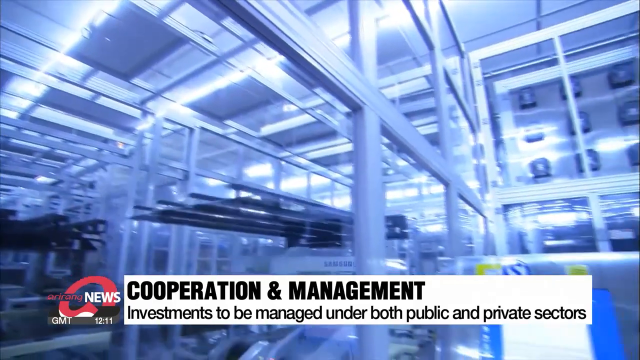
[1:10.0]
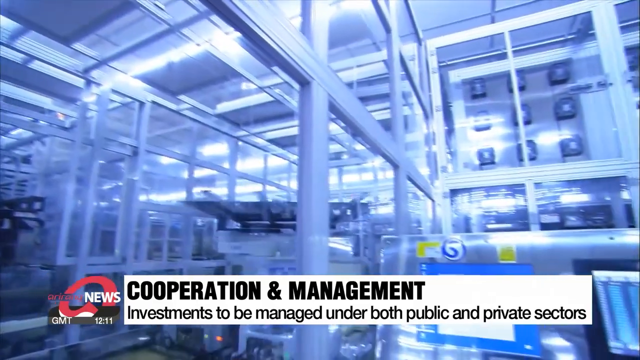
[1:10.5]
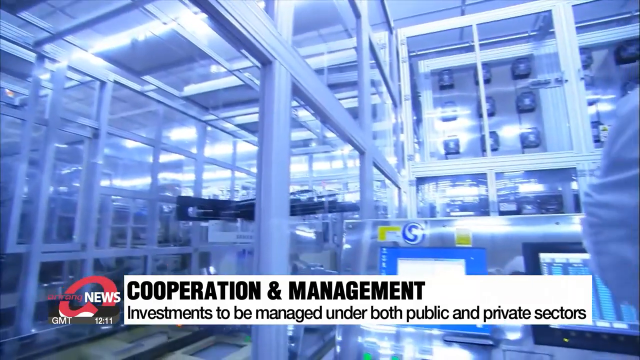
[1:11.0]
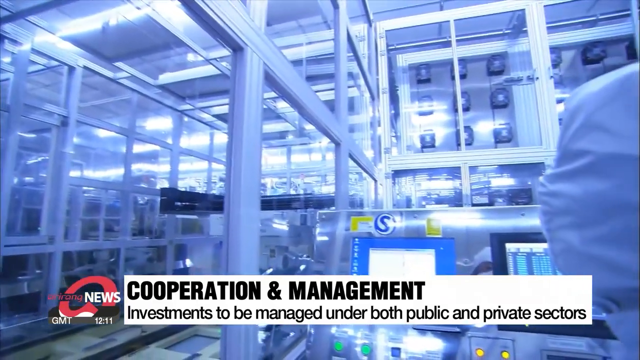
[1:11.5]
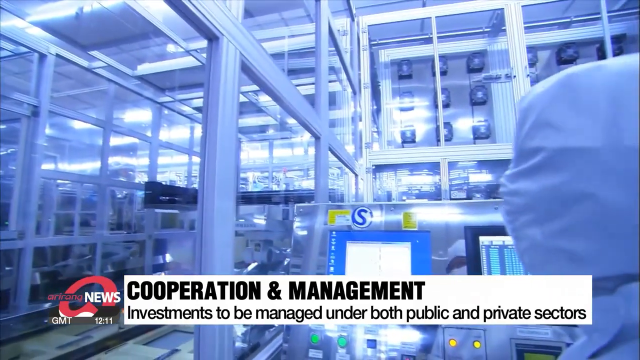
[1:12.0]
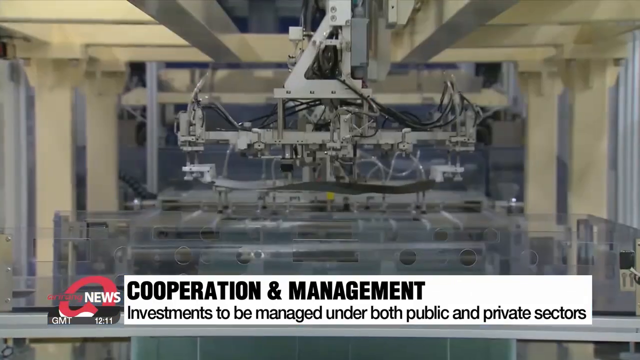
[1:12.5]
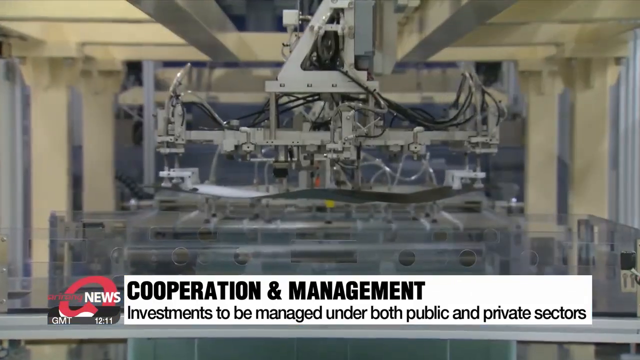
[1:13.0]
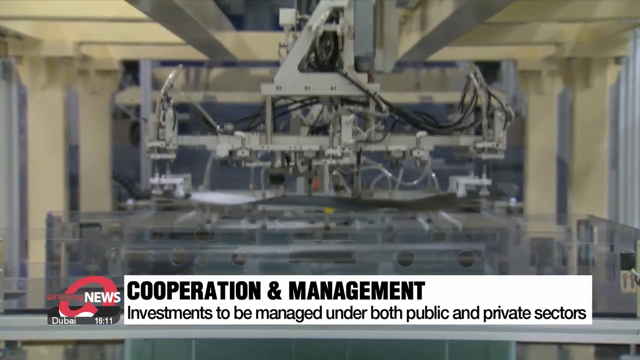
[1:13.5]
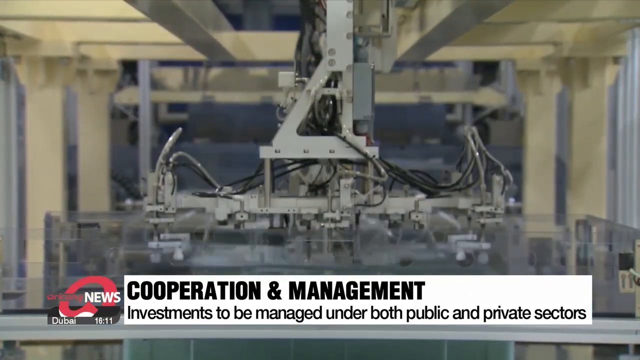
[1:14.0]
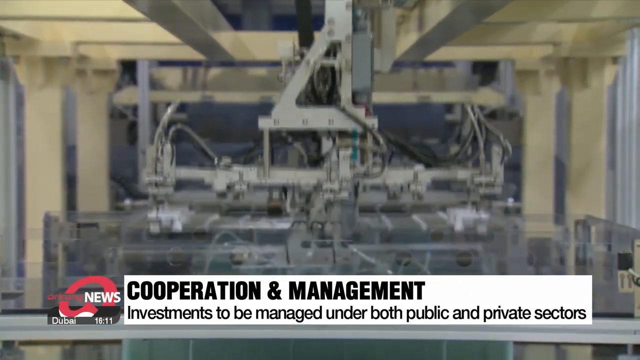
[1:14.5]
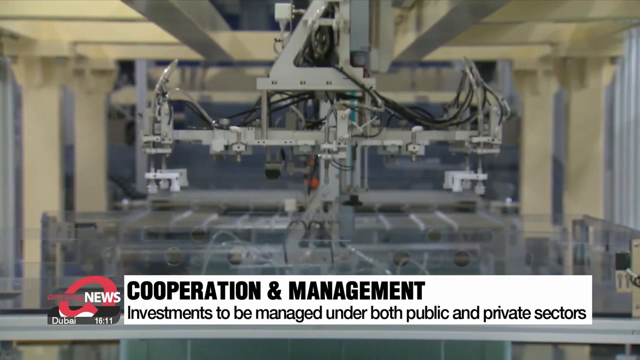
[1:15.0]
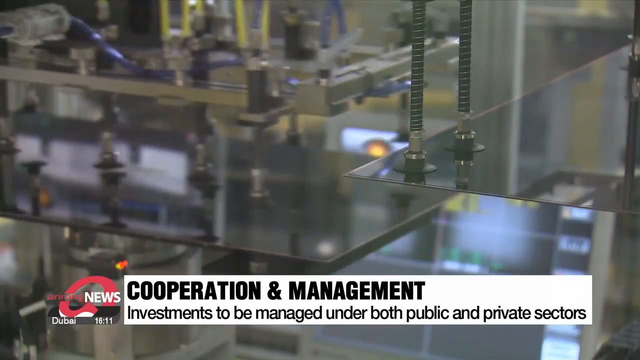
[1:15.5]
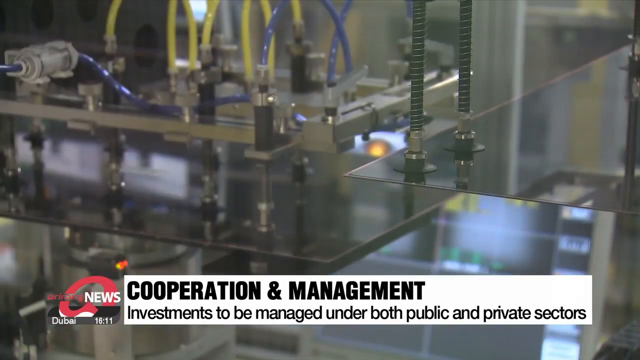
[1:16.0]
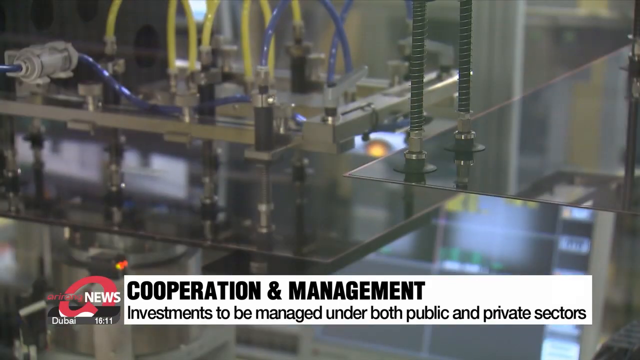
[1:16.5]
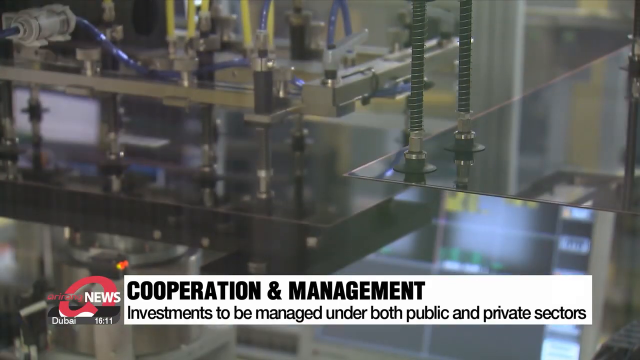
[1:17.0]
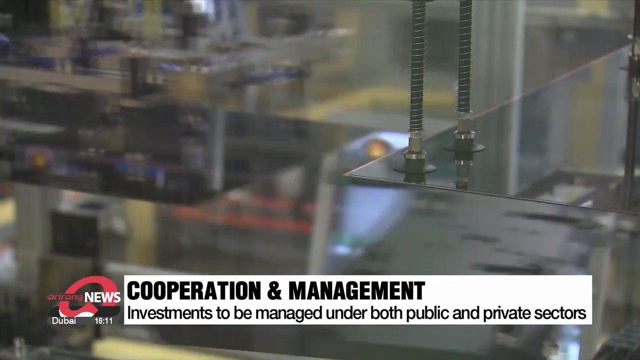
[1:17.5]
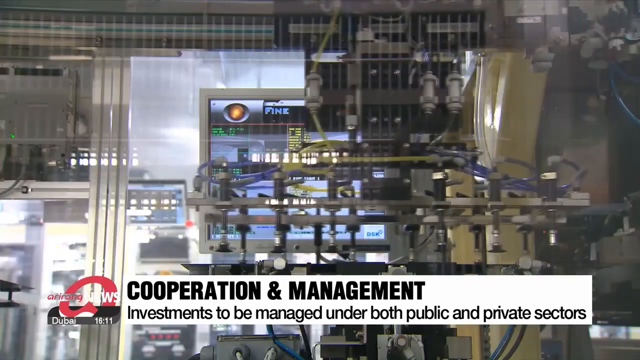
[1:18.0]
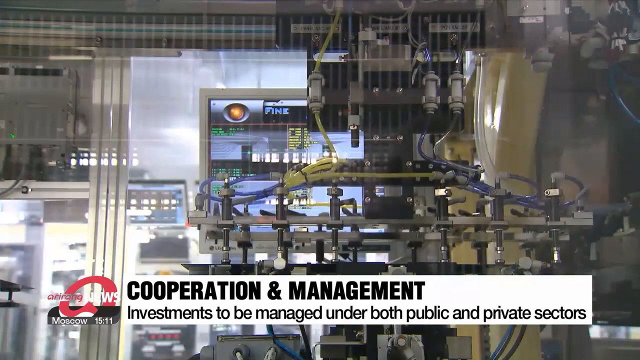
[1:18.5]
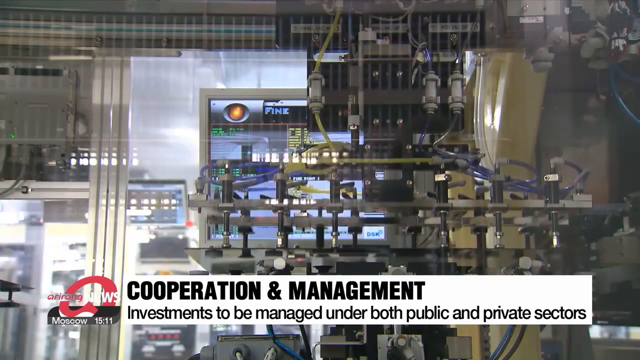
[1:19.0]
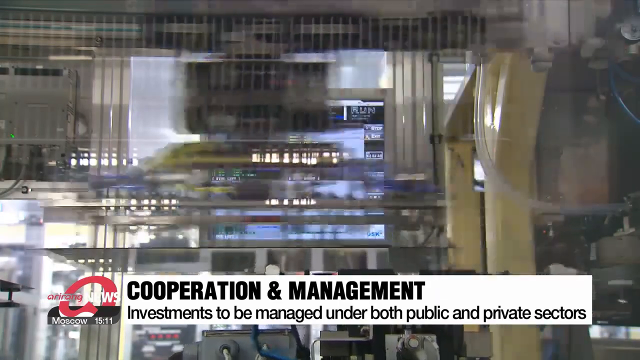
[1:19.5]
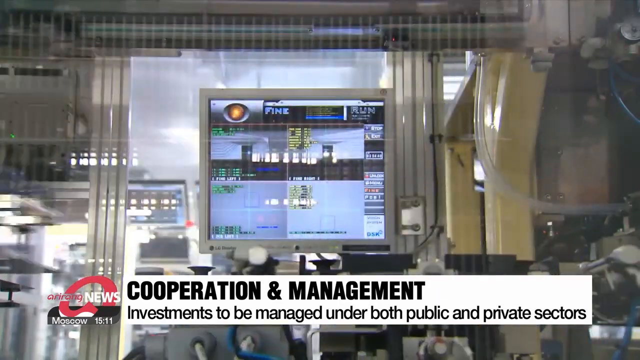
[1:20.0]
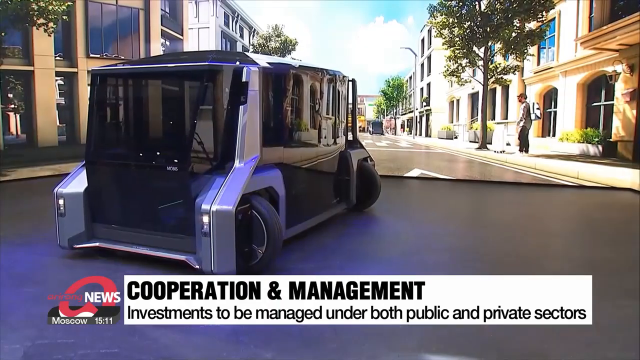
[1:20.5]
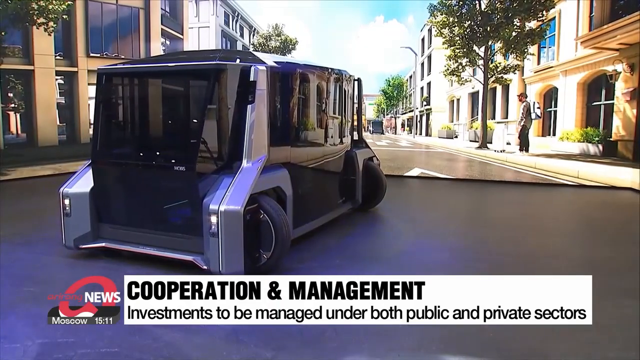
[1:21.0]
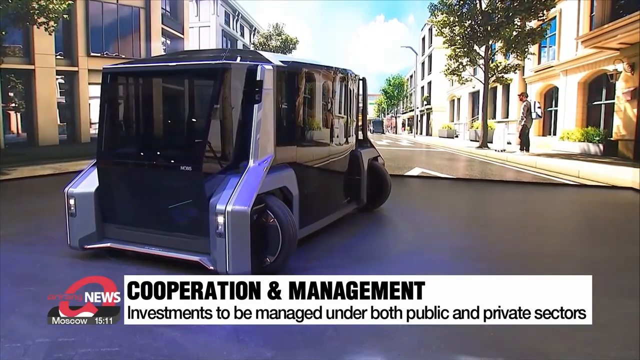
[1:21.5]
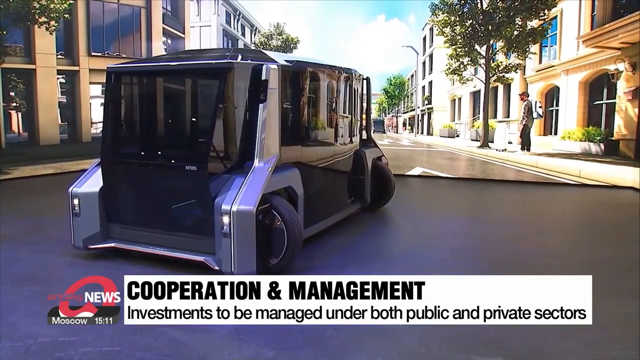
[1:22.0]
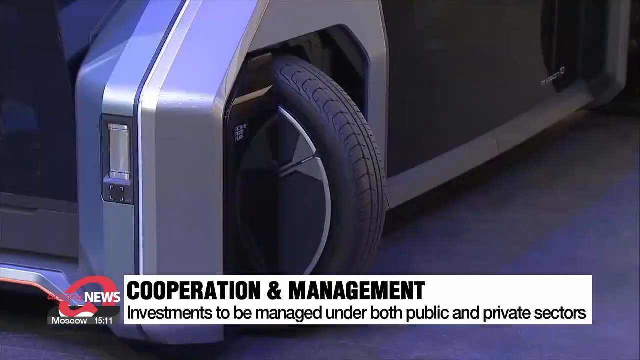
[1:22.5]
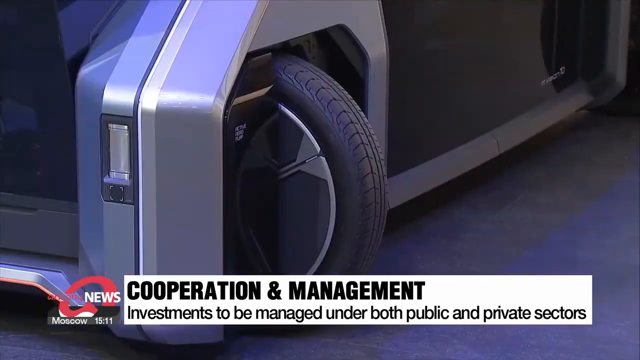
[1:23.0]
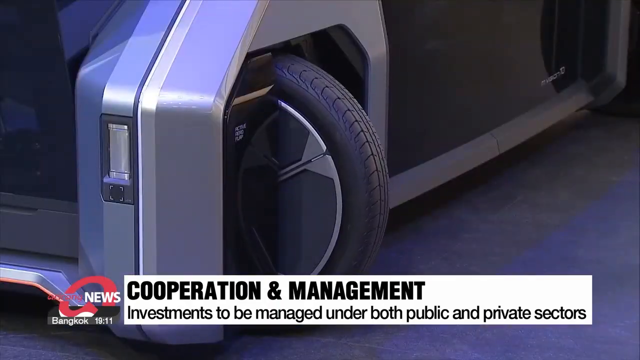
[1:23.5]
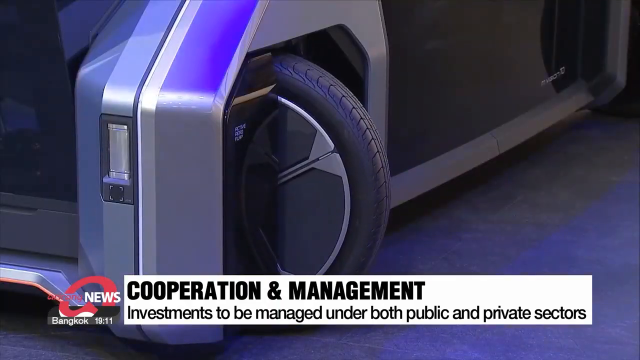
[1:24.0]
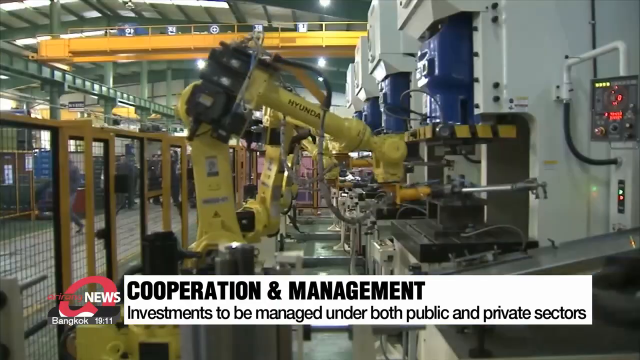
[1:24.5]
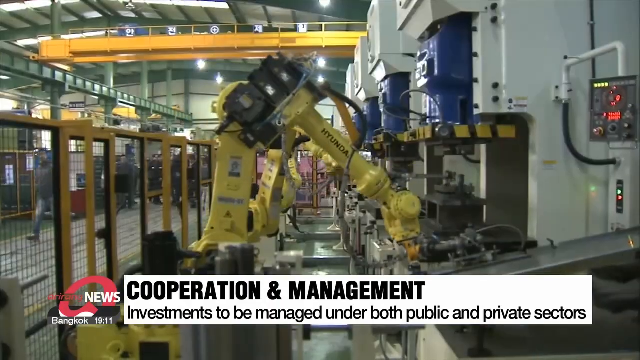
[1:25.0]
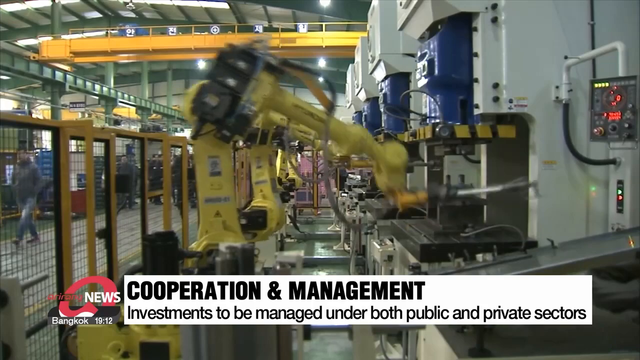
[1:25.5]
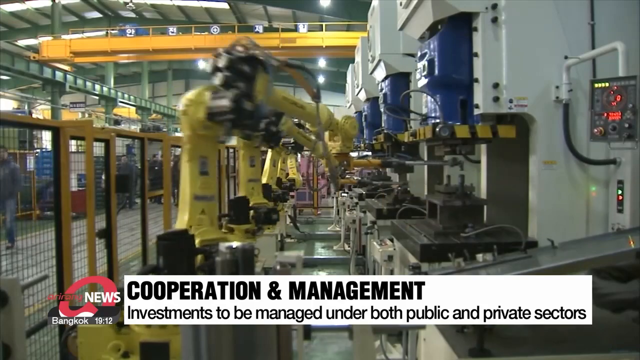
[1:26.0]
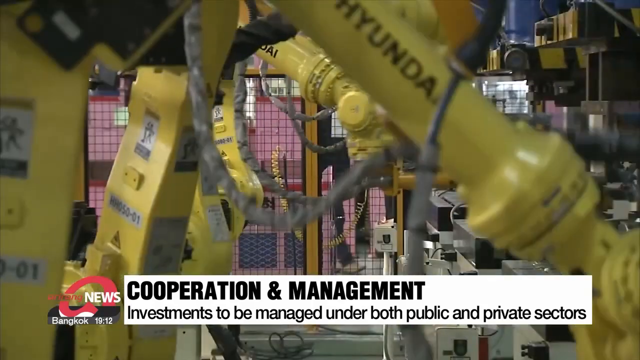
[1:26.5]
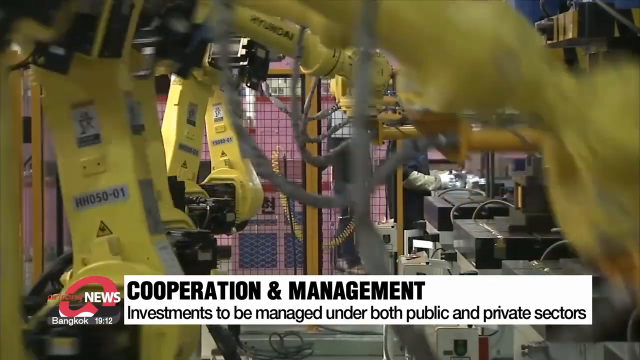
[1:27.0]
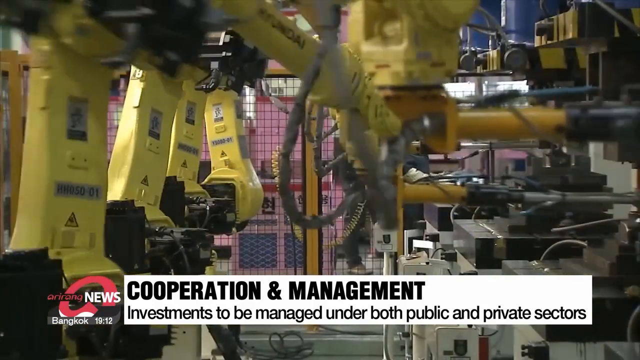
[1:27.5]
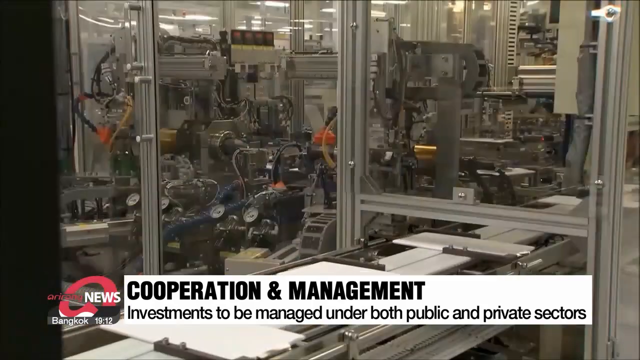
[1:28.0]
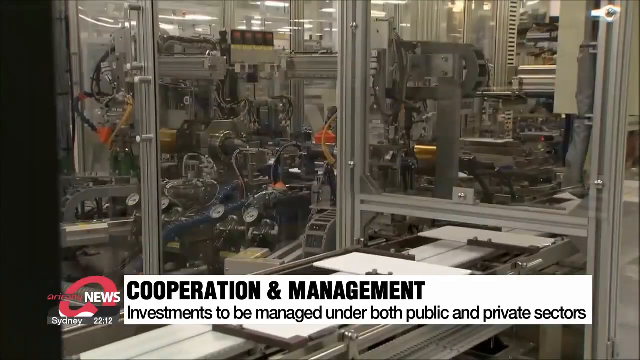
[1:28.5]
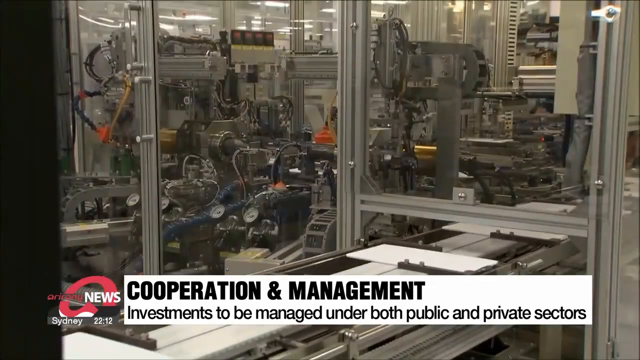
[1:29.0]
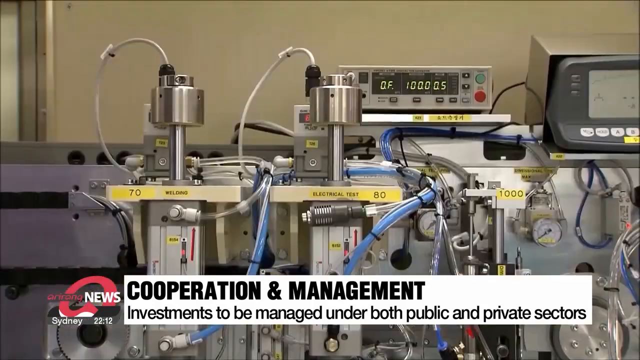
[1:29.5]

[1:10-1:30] The text at the bottom of the screen changes to read "cooperation and management, investments to be managed under both public and private sectors." The setting is still a lab with robotics moving around, shown in close-ups as they press down and pick up something like glass. A very odd, futuristic-looking rectangular vehicle moves sideways, its wheels turned sideways and spinning a little. Big yellow robotic arms move and perform a task. The shots change very quickly, showing various types of robotics grabbing, stamping and moving things, and entire rooms full of robotics and electronics all performing tasks, all of which appears to take place in a lab.